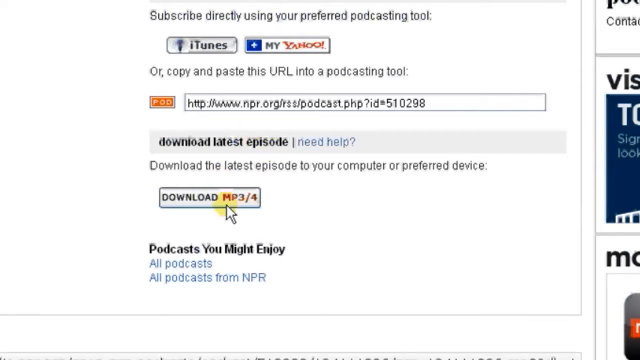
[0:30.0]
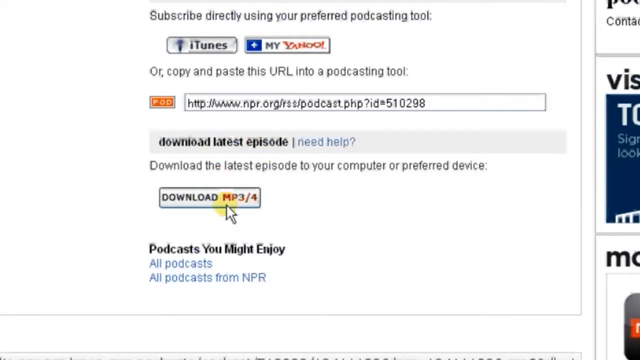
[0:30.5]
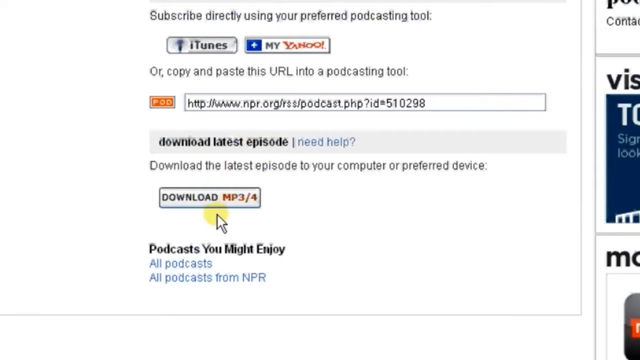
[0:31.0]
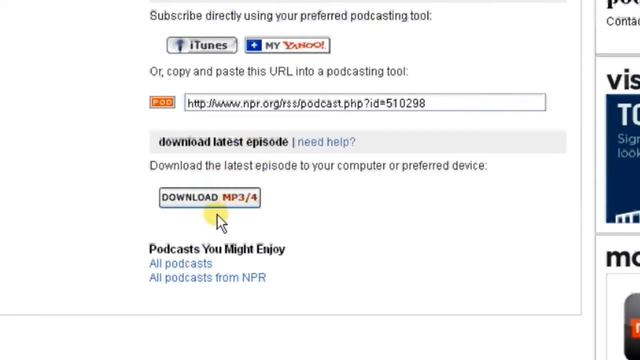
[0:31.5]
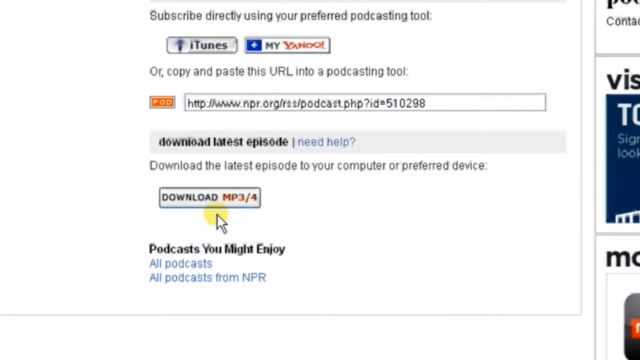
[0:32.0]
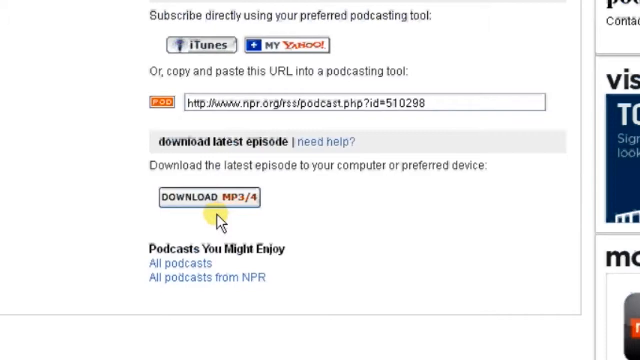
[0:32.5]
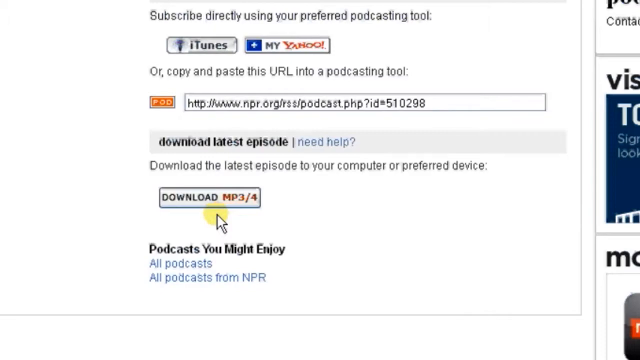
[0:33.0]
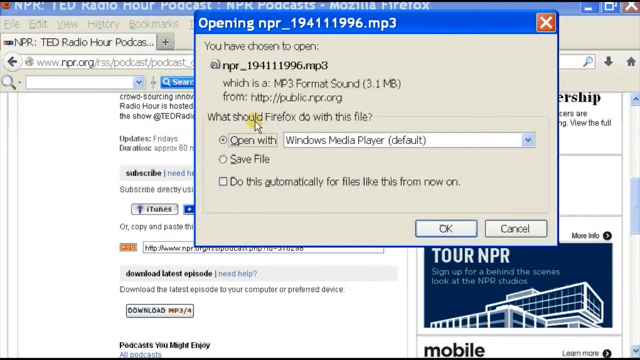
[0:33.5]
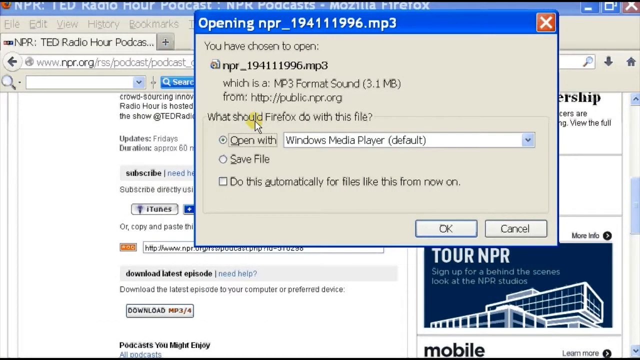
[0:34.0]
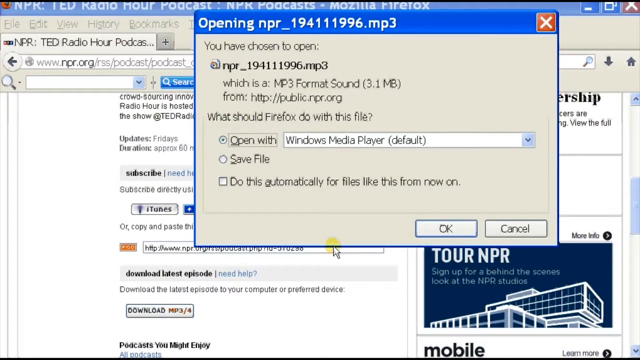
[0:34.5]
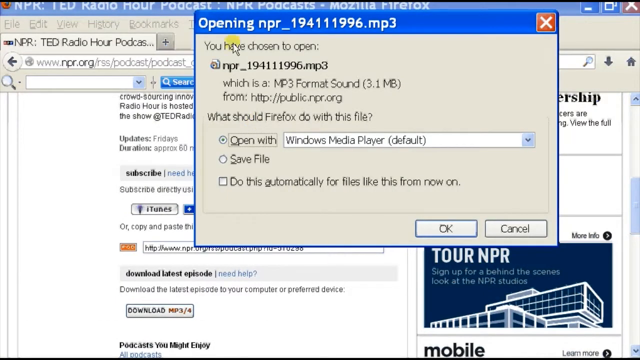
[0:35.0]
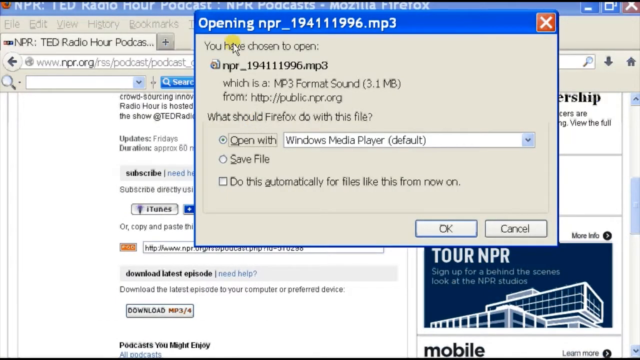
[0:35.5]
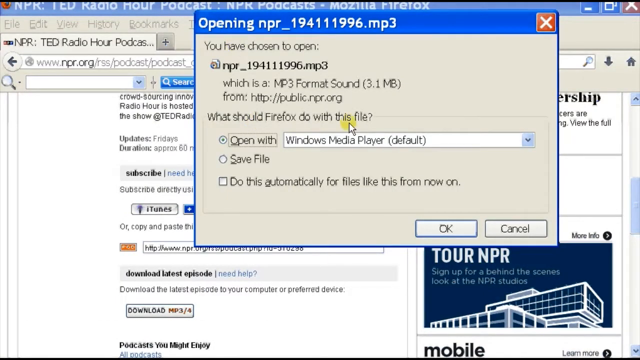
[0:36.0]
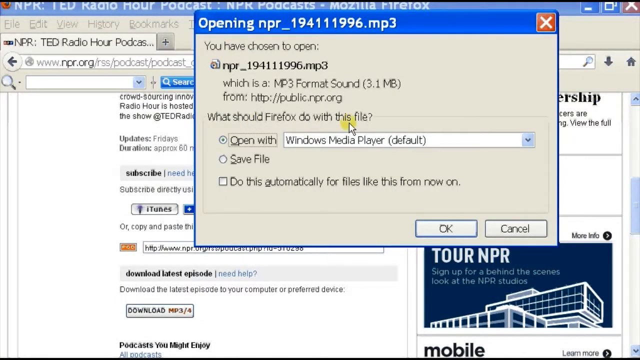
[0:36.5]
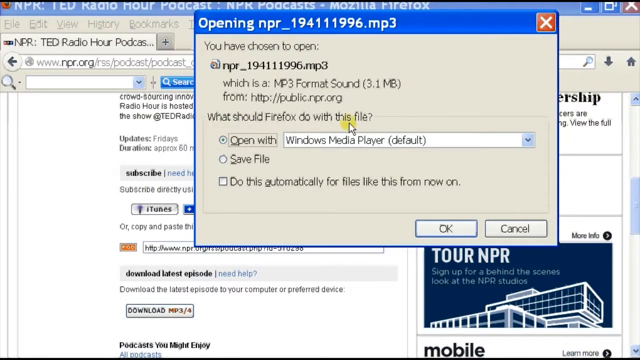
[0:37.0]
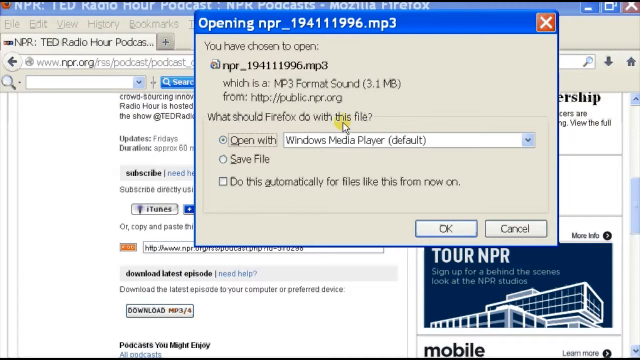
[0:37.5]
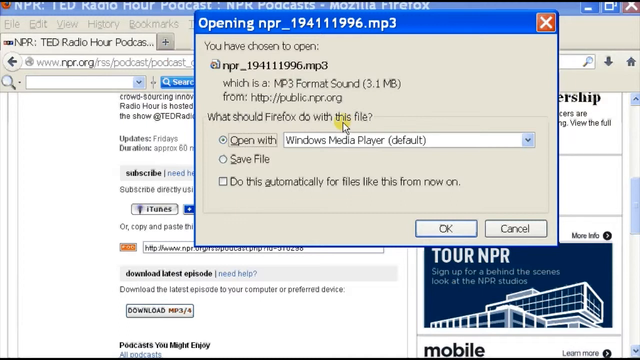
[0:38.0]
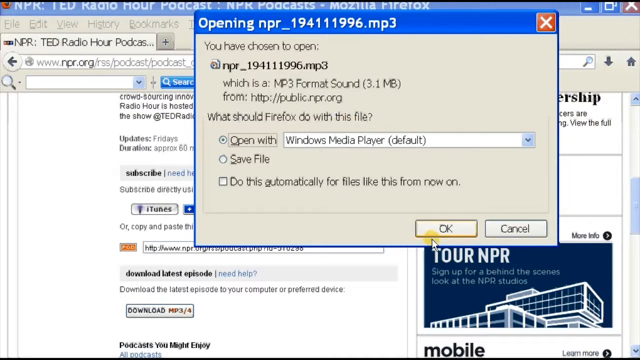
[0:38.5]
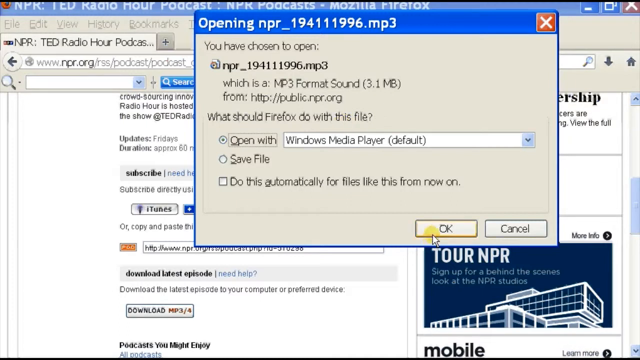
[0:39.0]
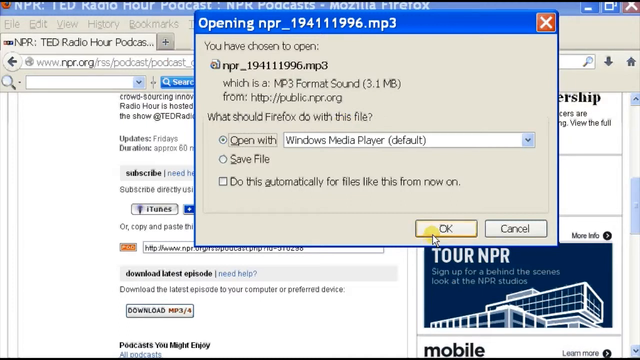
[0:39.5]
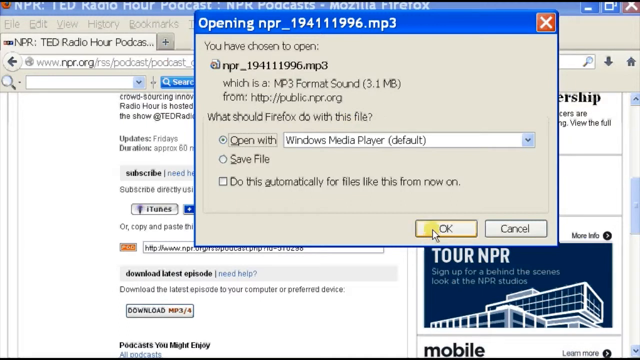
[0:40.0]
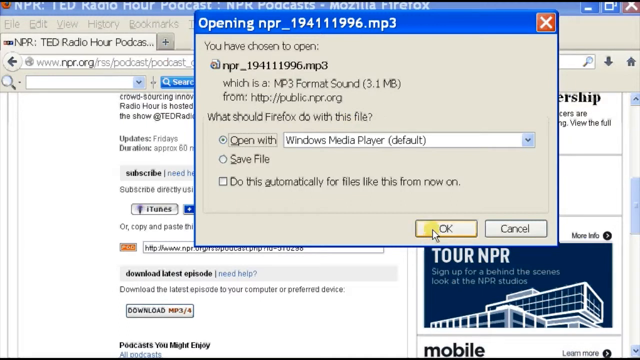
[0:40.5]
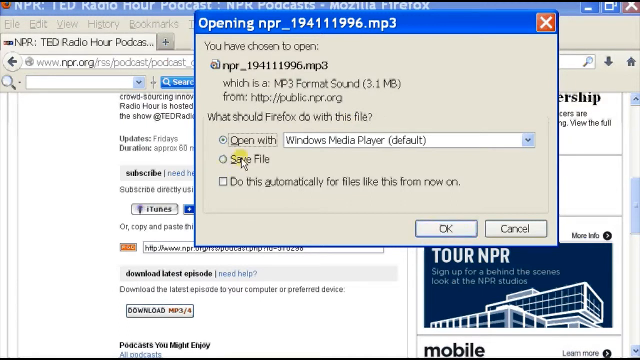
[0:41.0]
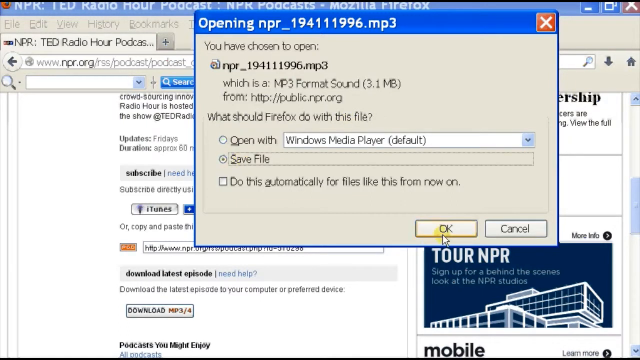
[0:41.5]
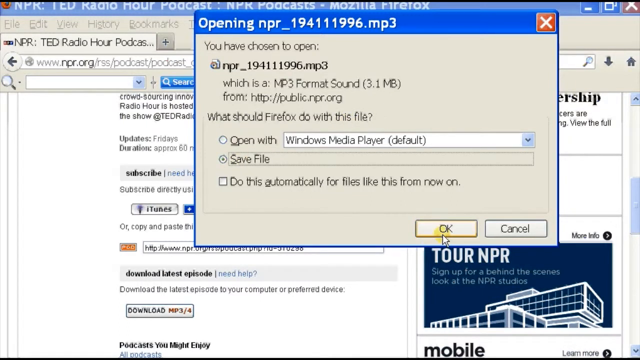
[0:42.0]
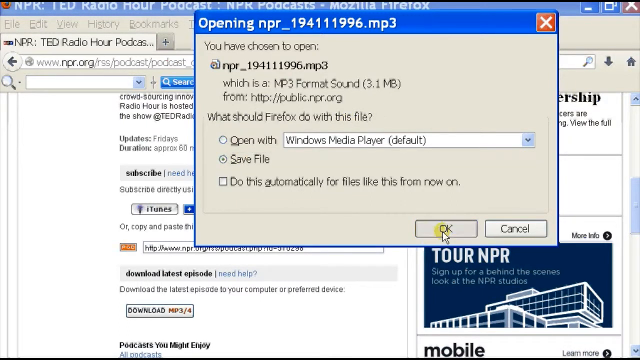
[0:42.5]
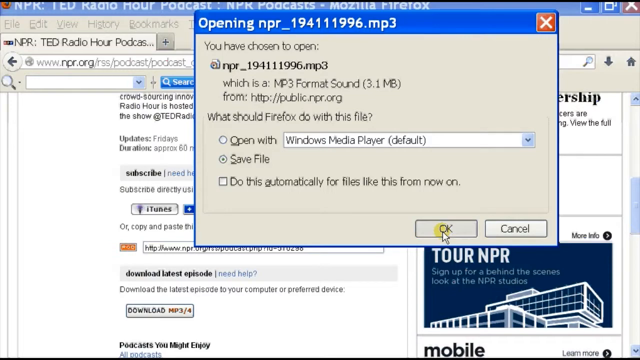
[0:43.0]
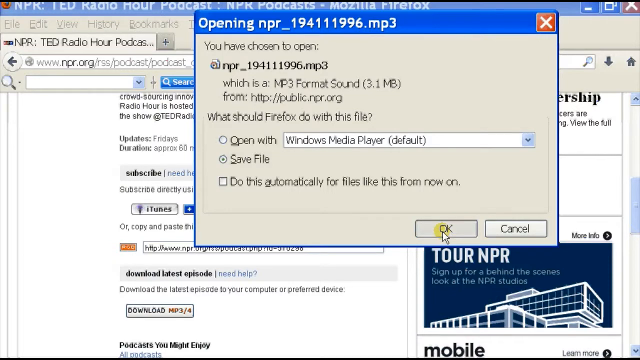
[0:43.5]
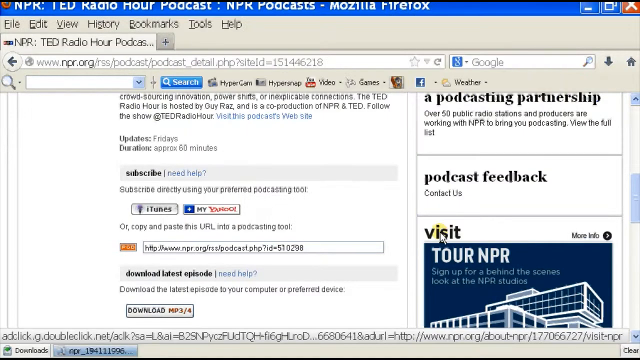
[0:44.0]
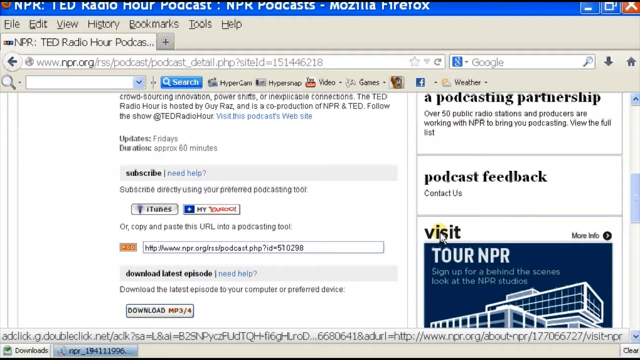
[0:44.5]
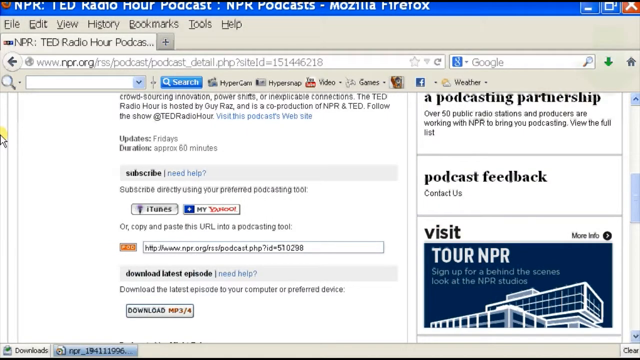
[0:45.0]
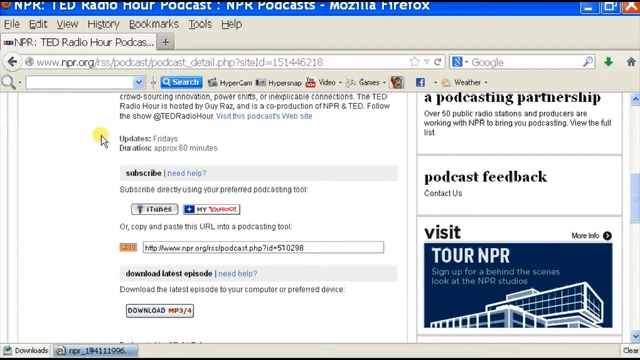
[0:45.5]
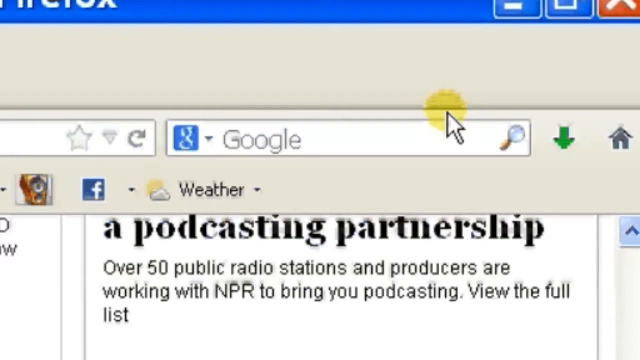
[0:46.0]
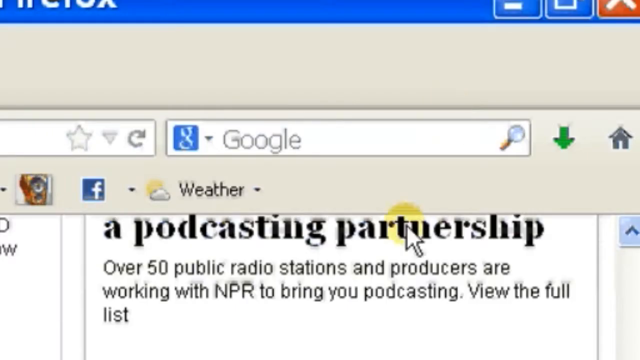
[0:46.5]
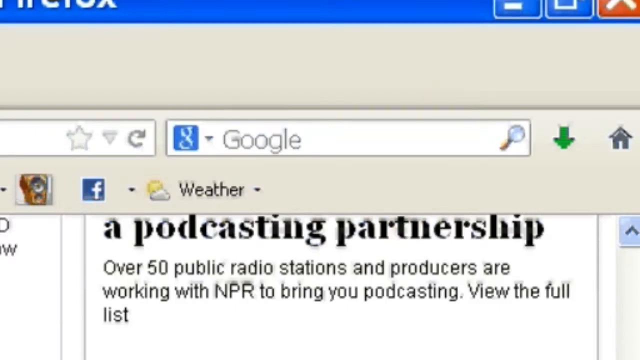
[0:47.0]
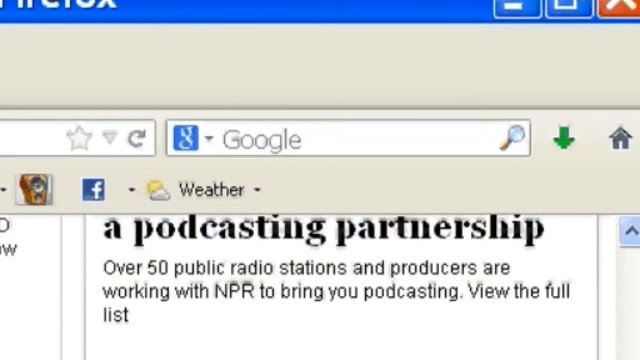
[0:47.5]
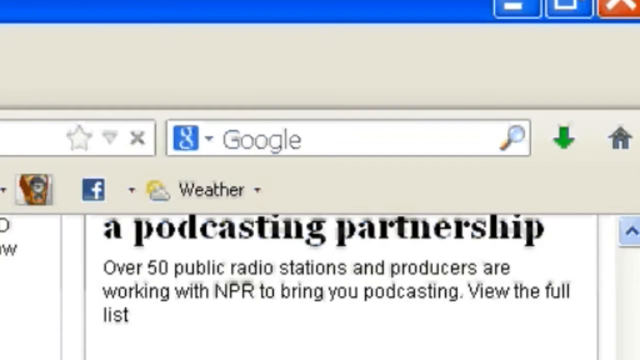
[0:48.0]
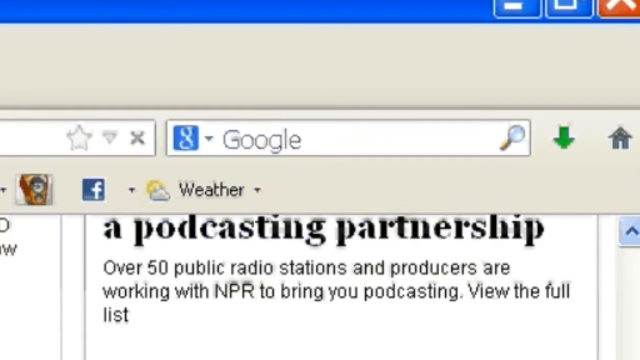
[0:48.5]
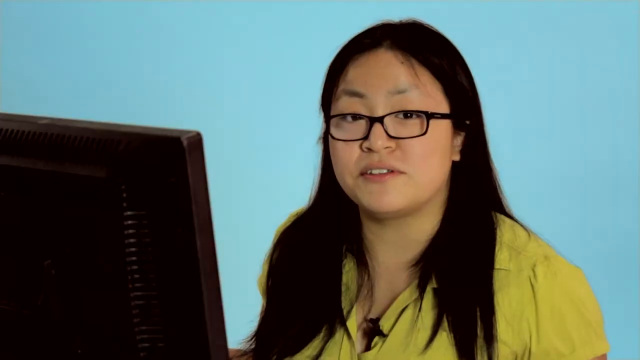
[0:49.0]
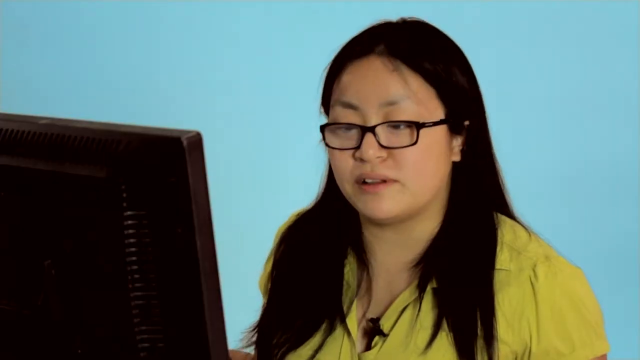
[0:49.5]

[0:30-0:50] The page gives options to subscribe directly using preferred podcasting tools such as iTunes or My Yahoo, or to copy and paste a provided URL into a podcasting tool, and to download the latest episodes as an MP3 or MP4. The user seems to choose to download something, because a pop-up box appears that says "opening NPR" followed by a long number and "MP3". It offers the options to open with Windows Media Player or save the file, plus a check box to do this automatically, with open with Windows Media Player already set as the default. The user selects save the file instead of opening it and clicks OK. The video then returns to the web developer as she starts to speak.